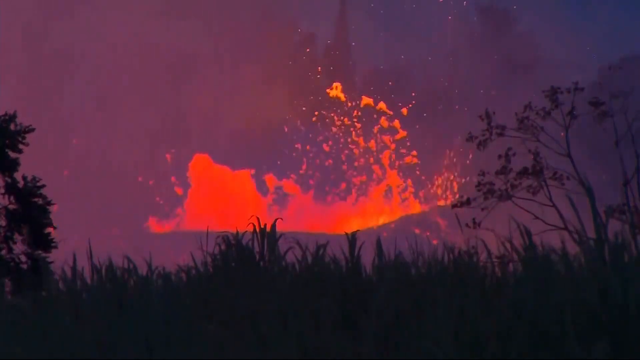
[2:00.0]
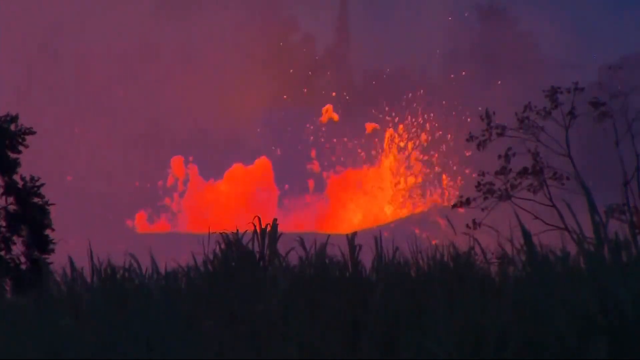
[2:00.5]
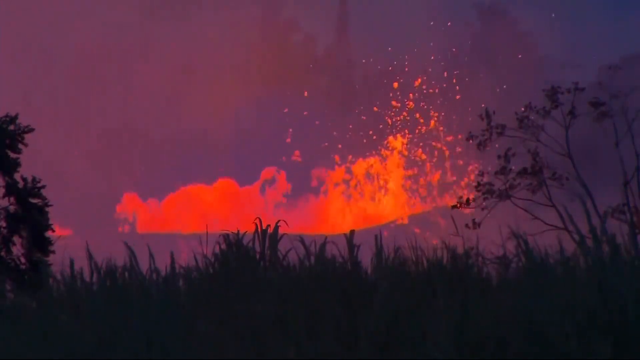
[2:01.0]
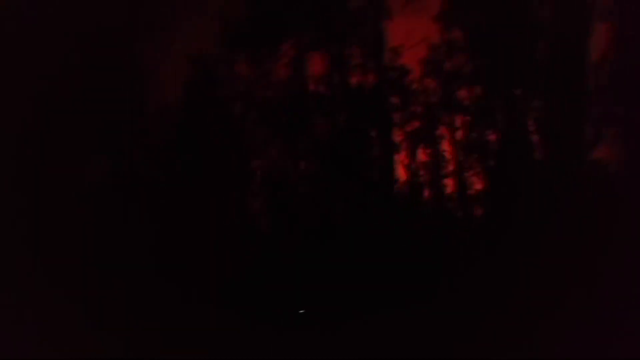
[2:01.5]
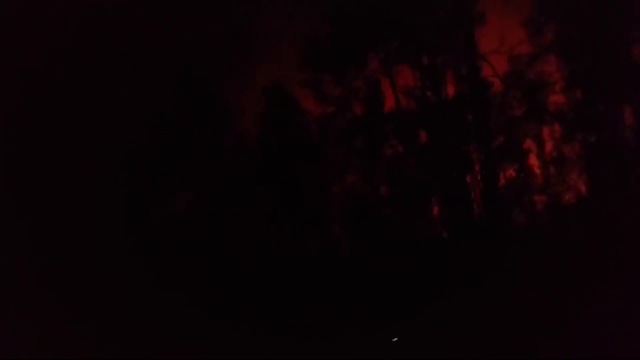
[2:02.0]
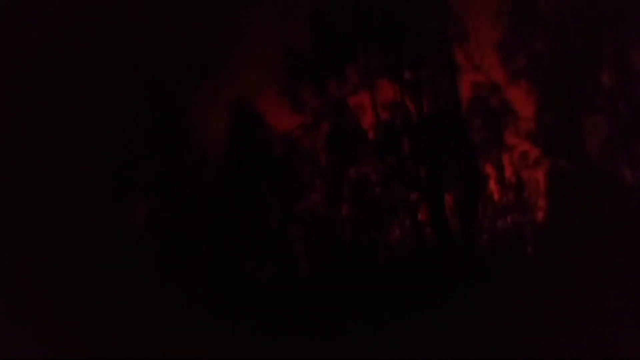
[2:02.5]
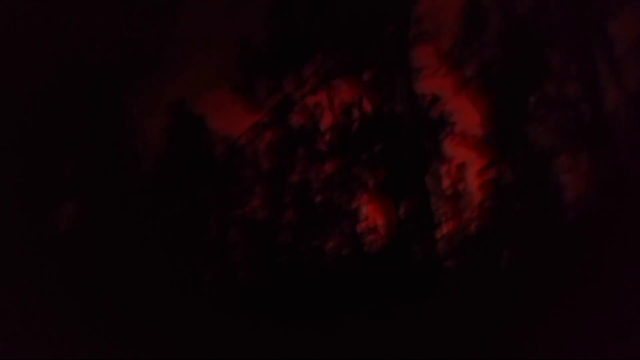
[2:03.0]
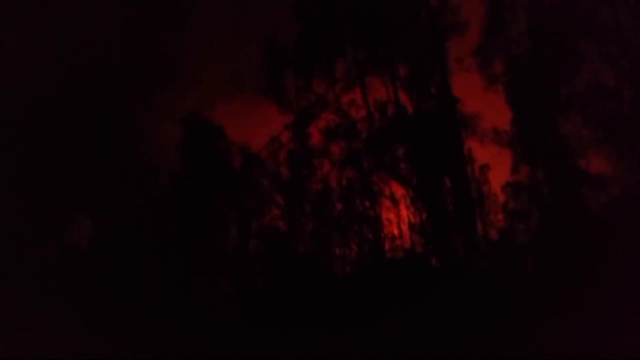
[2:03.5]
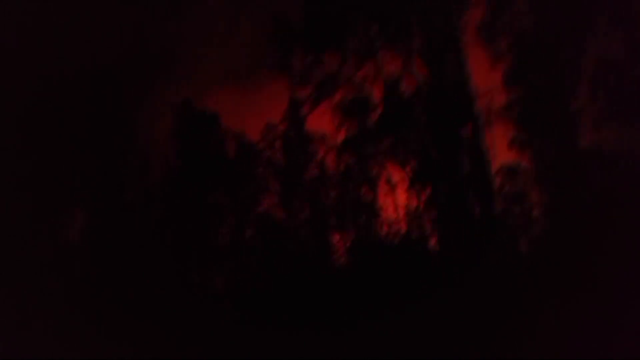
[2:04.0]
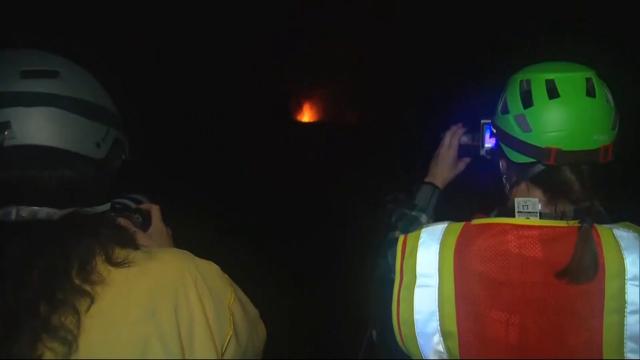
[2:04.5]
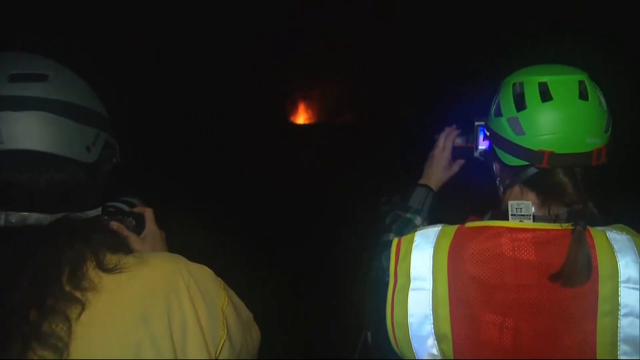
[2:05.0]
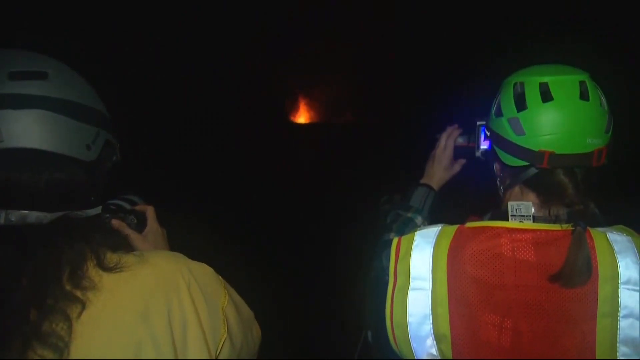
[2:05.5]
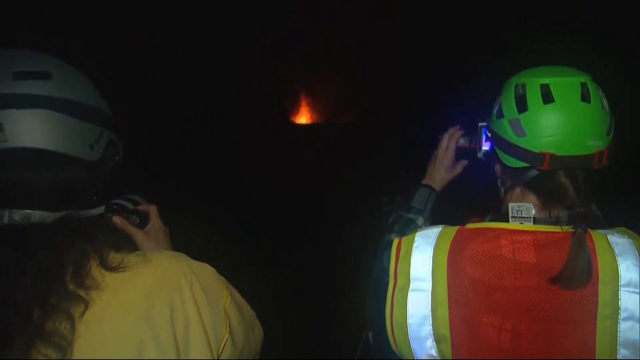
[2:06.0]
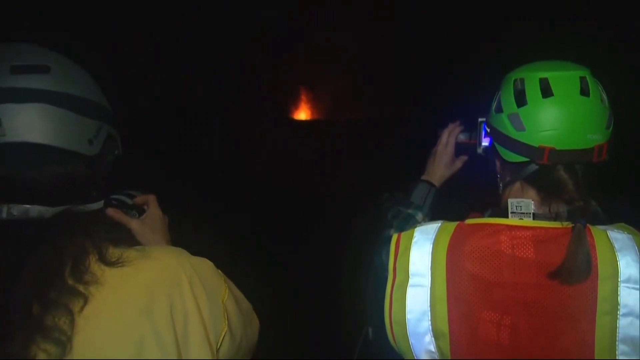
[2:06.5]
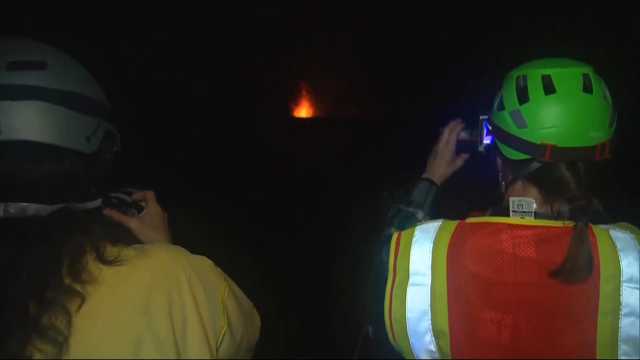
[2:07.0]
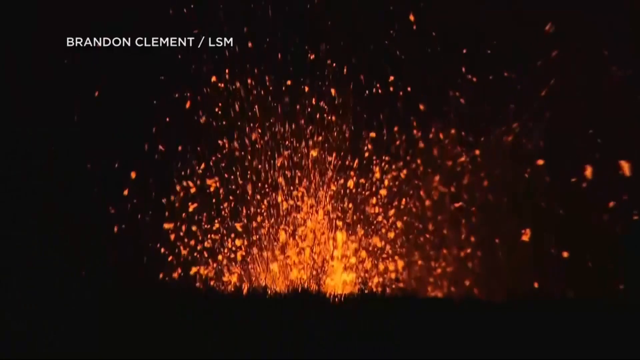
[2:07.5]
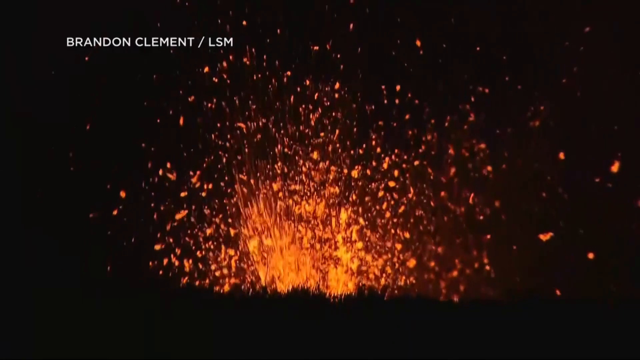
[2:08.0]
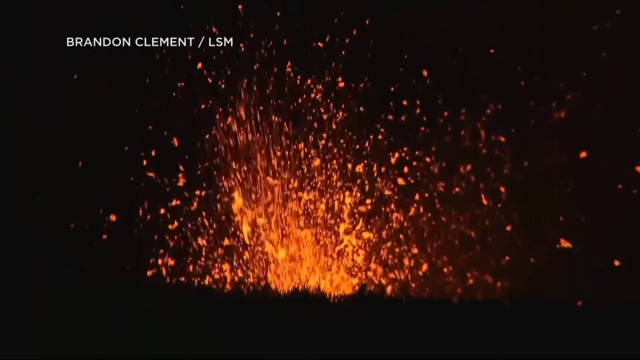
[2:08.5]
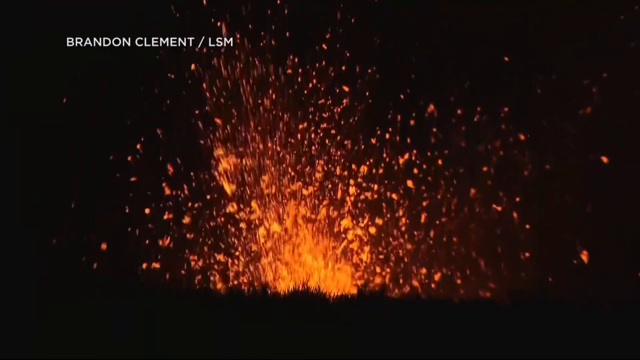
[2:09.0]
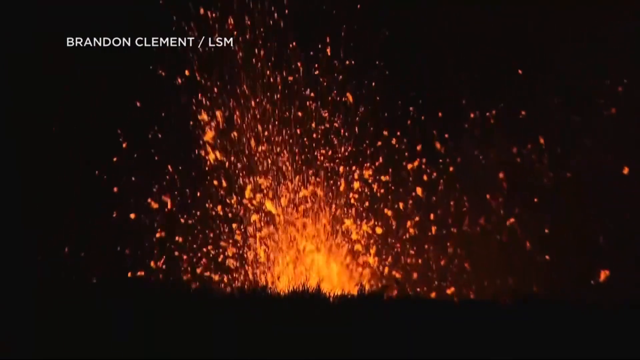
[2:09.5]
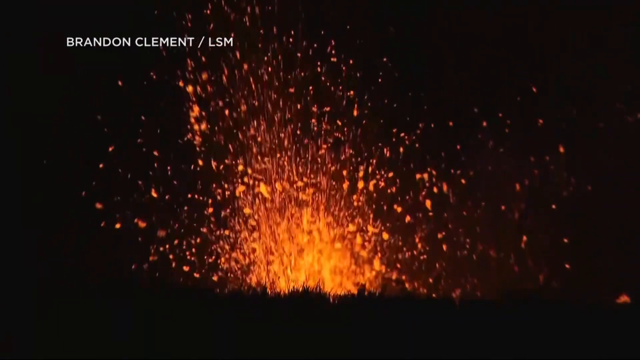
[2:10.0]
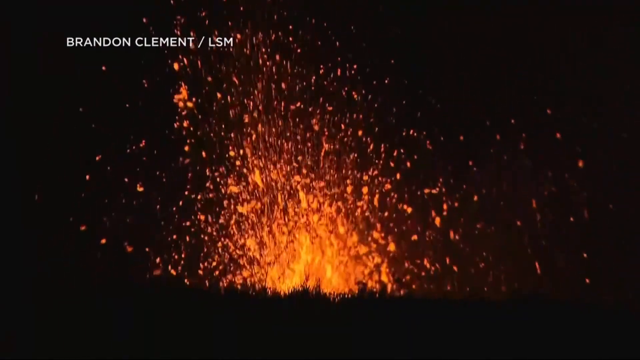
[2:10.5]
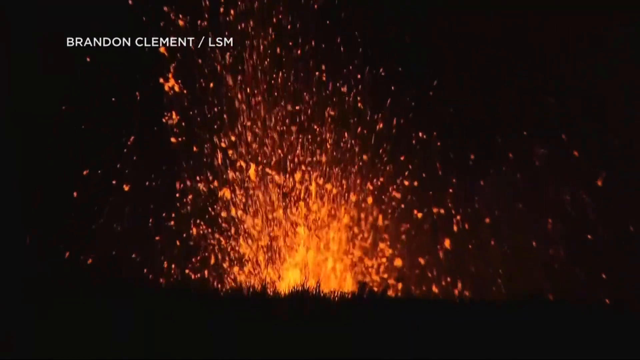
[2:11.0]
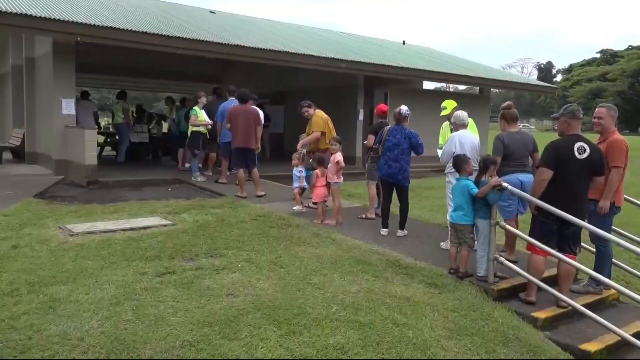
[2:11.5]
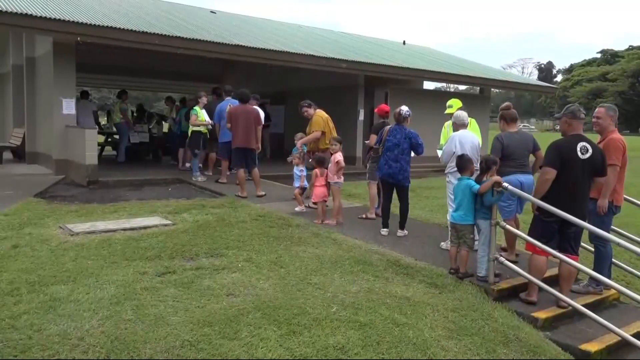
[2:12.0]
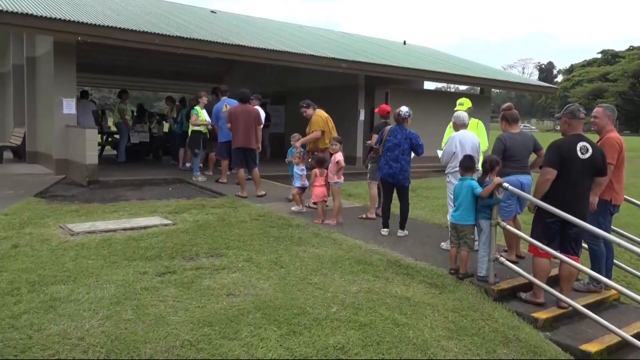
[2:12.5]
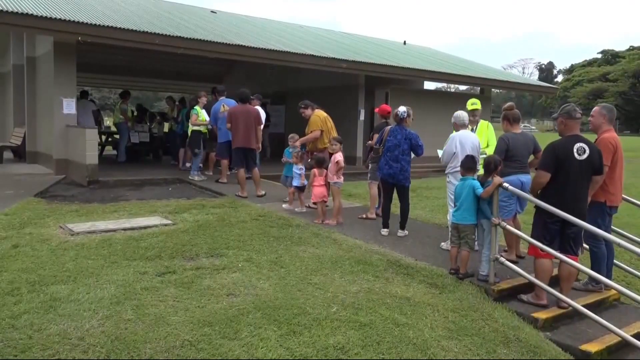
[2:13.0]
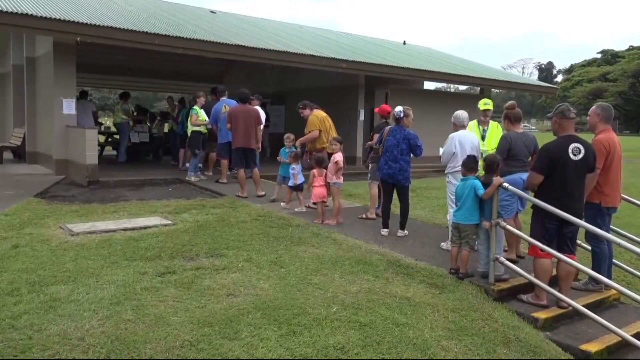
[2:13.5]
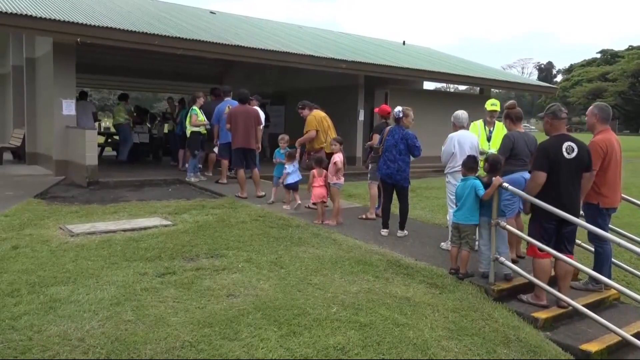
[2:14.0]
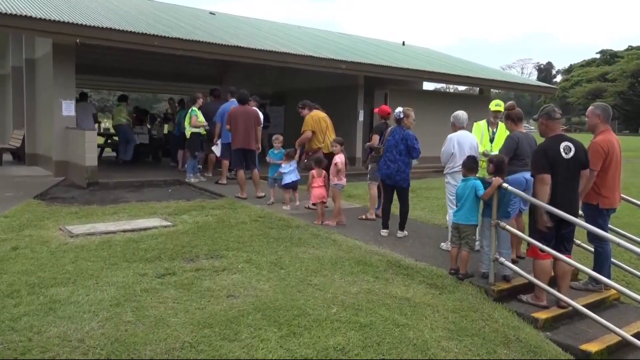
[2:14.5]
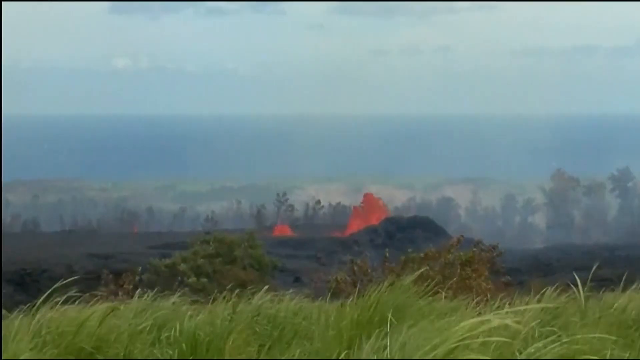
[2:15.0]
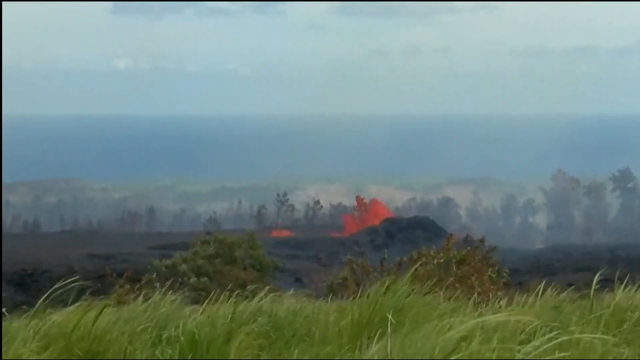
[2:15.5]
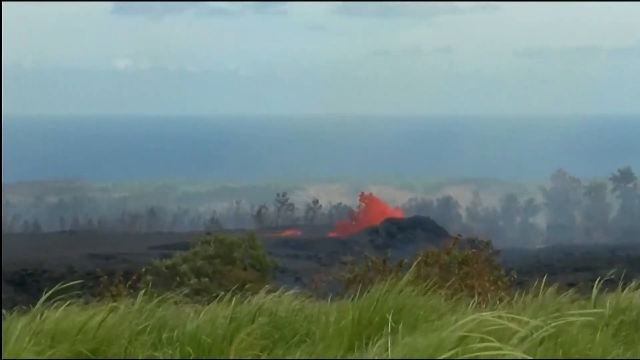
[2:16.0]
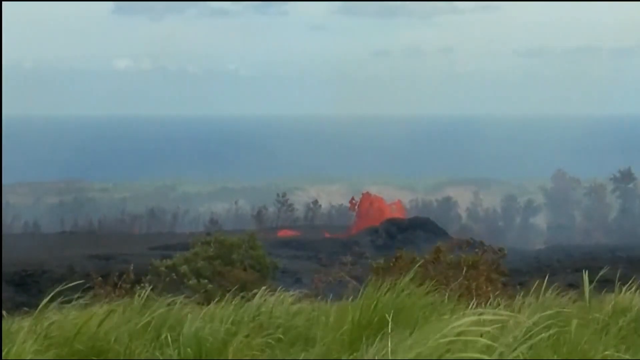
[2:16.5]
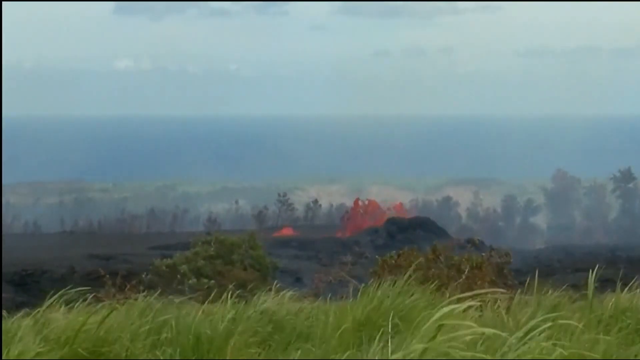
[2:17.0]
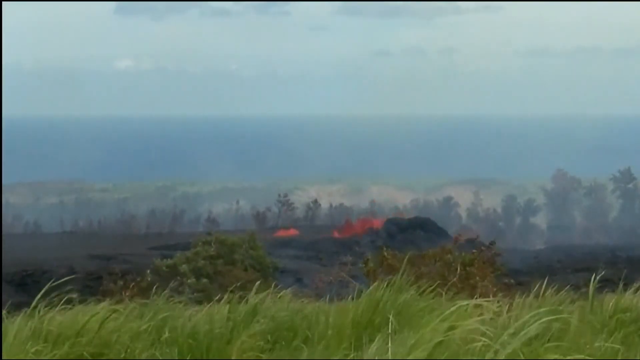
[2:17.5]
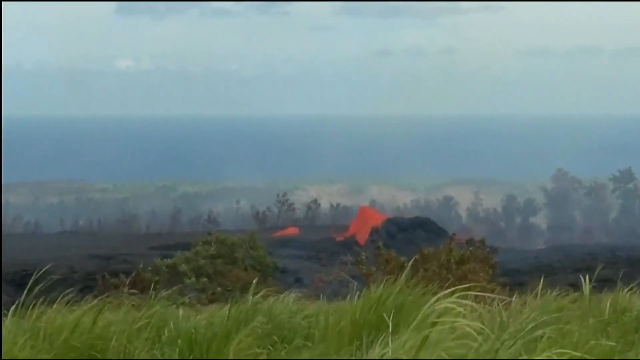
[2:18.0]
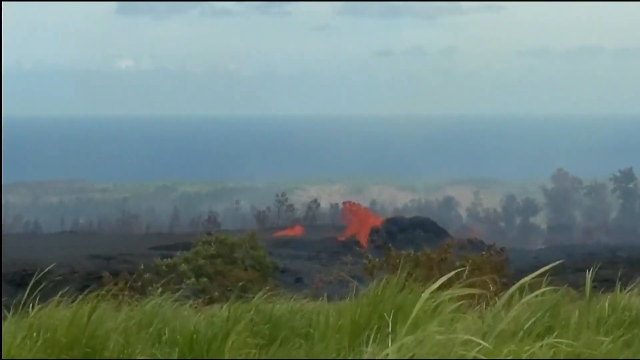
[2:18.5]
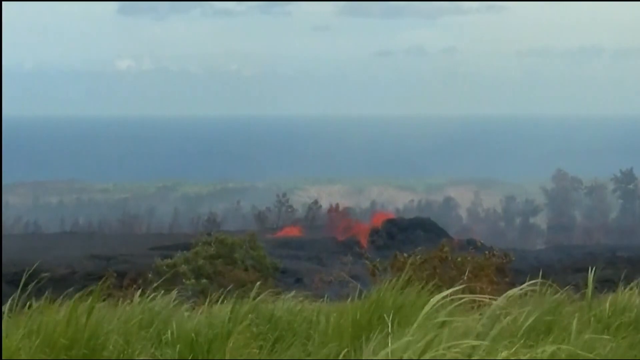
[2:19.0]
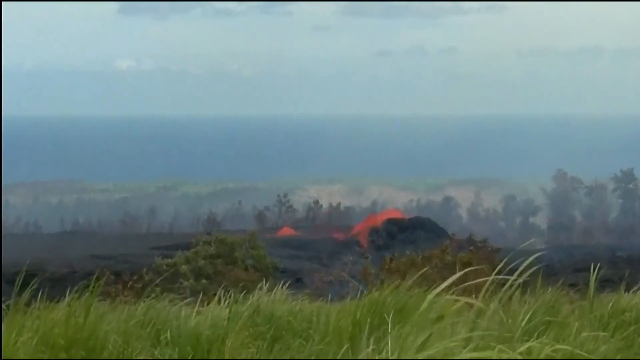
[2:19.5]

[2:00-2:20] Footage shows a volcanic eruption, with trees and grass in the foreground appearing almost as shadows. It quickly cuts to what seems to be helmet footage of someone walking through the forest; the sky appears bright red and all the trees look like shadows. It cuts to two individuals standing far away, both wearing helmets and both with cameras; the one on the right wears a construction vest and a bright green helmet. It then cuts to up-close, high-definition footage with the words "Brandon Clement / LSM" in white text at the top left, showing a volcanic eruption occurring from the ground against a black background. It transitions to a line of people of all ages, children, middle-aged and old, standing in a line up to a building; the line extends down the sidewalk and even onto the tops of some stairs. It then cuts to footage of the volcanic eruption during the day.